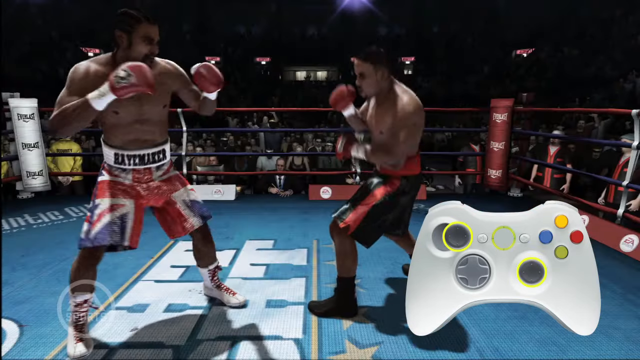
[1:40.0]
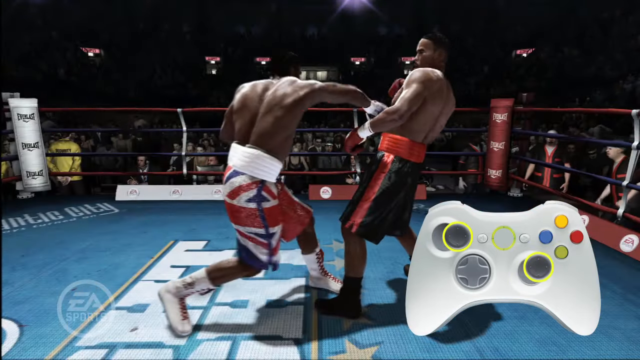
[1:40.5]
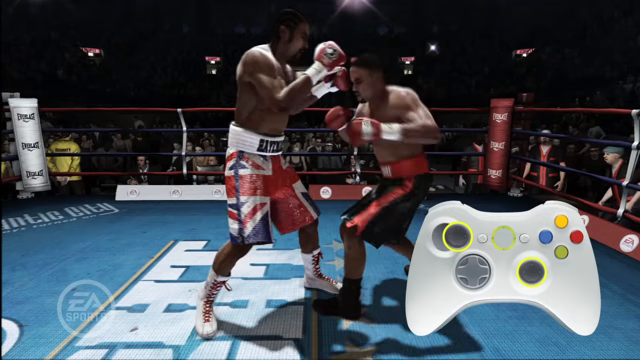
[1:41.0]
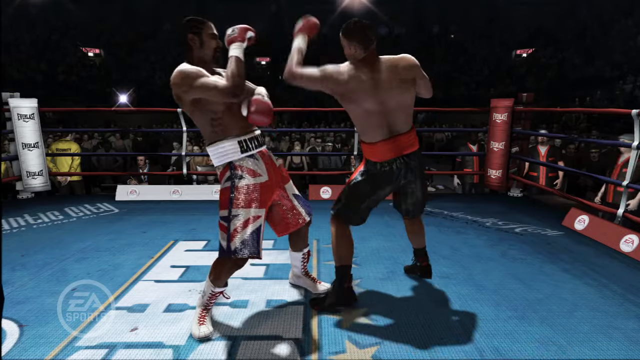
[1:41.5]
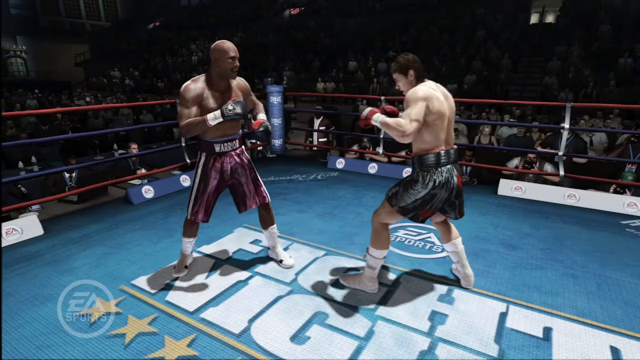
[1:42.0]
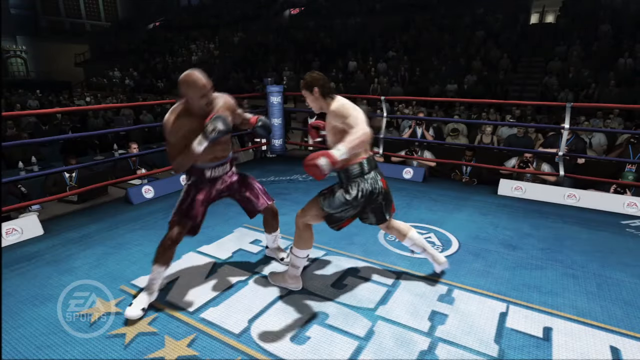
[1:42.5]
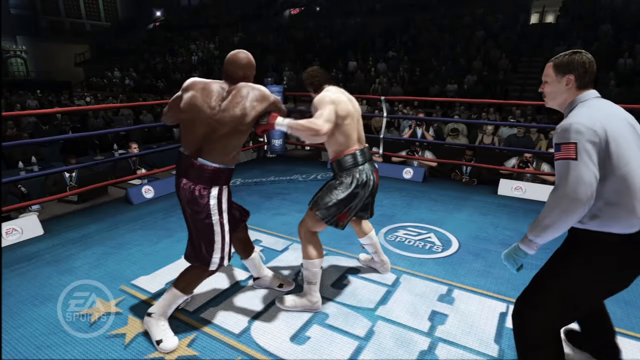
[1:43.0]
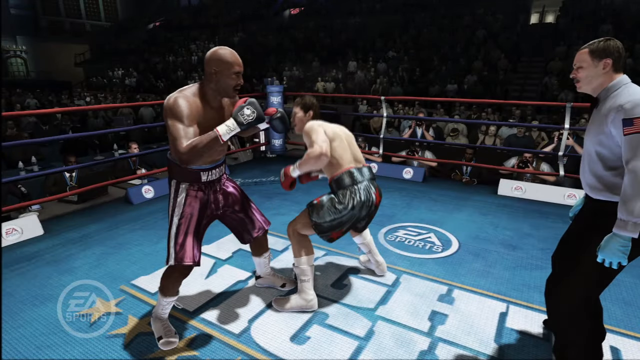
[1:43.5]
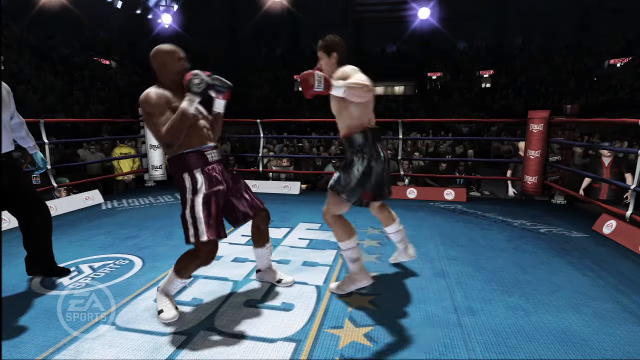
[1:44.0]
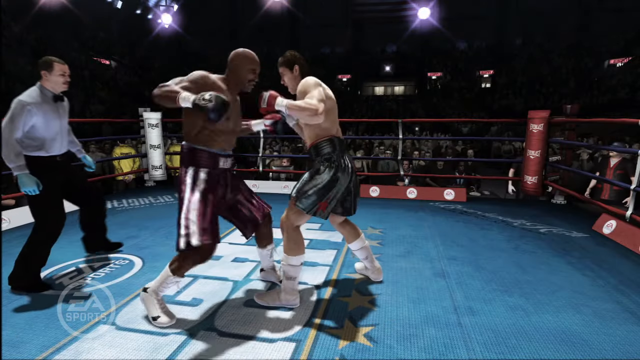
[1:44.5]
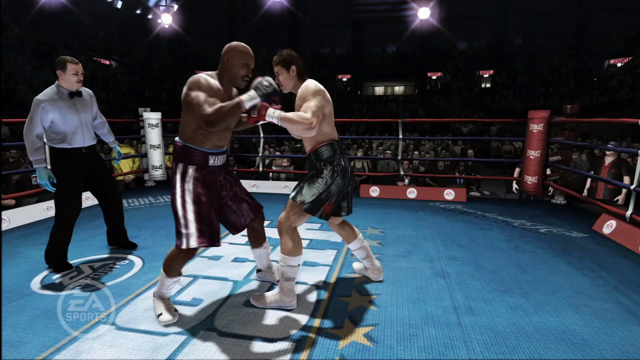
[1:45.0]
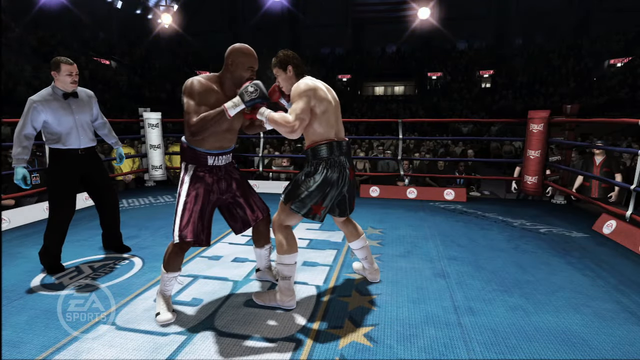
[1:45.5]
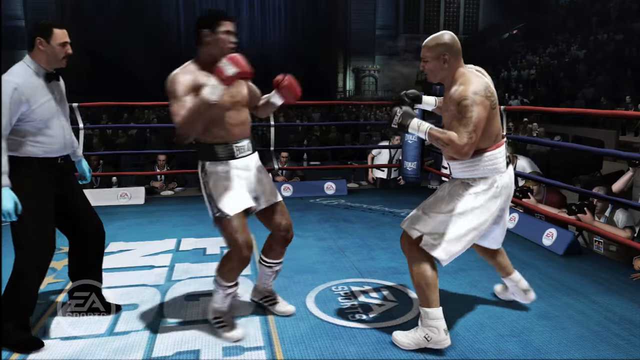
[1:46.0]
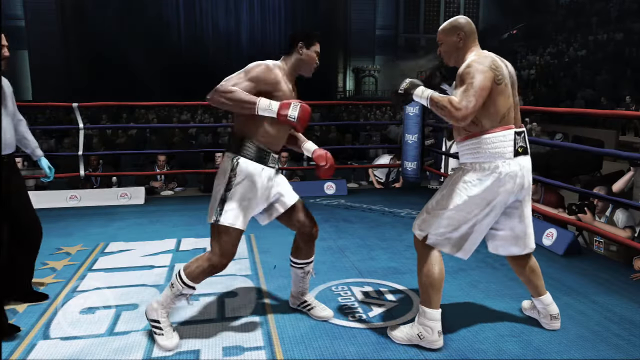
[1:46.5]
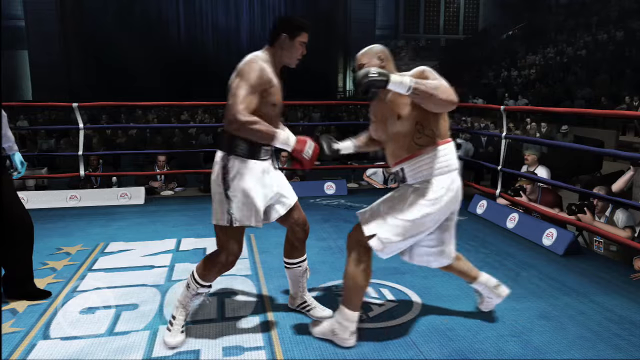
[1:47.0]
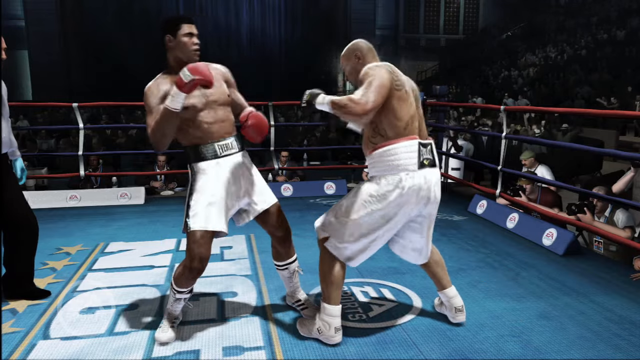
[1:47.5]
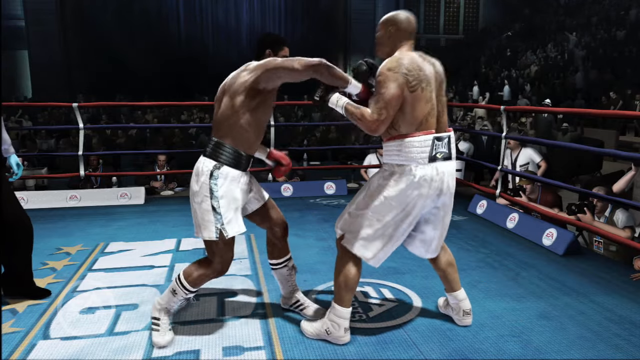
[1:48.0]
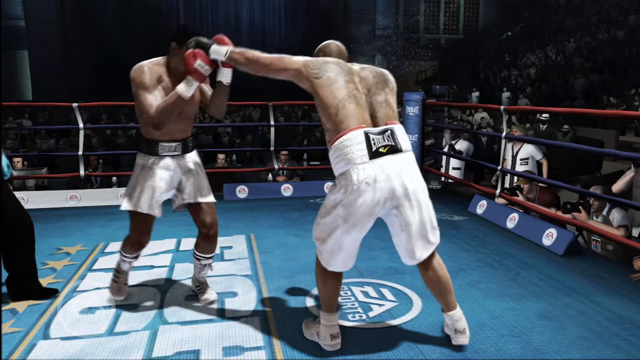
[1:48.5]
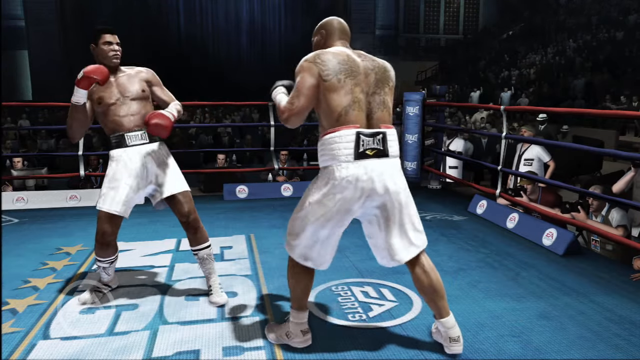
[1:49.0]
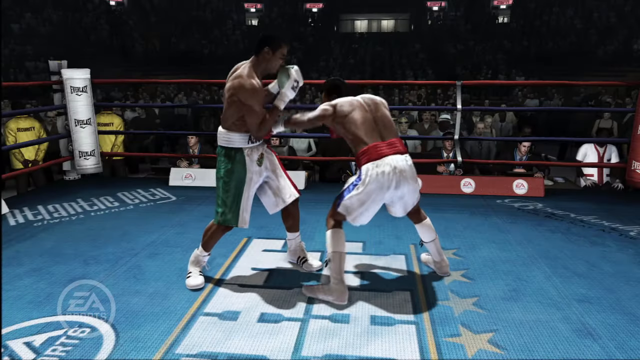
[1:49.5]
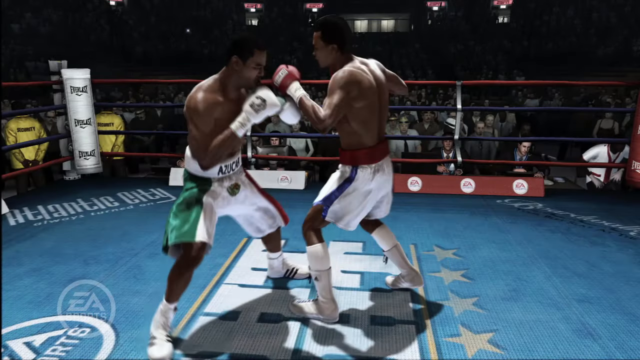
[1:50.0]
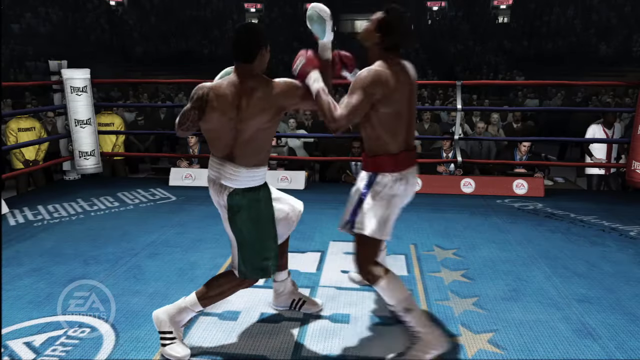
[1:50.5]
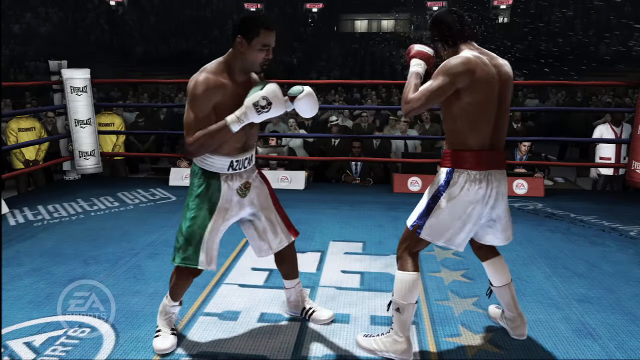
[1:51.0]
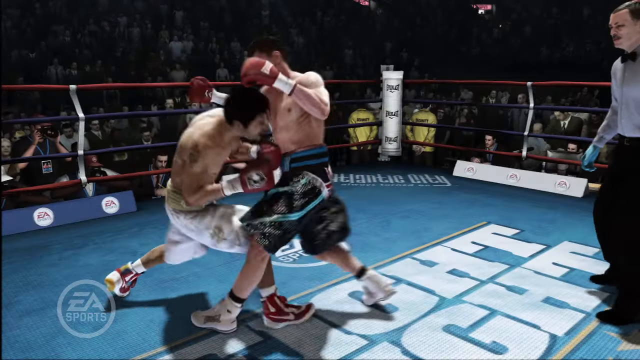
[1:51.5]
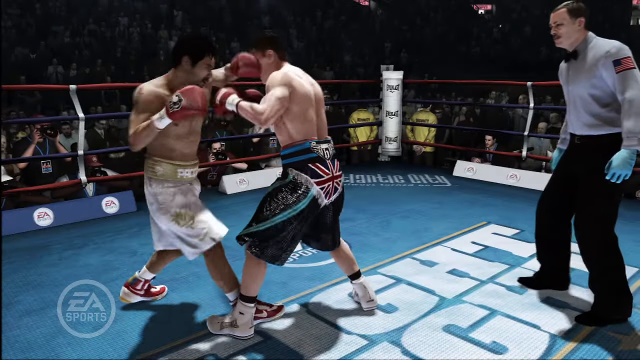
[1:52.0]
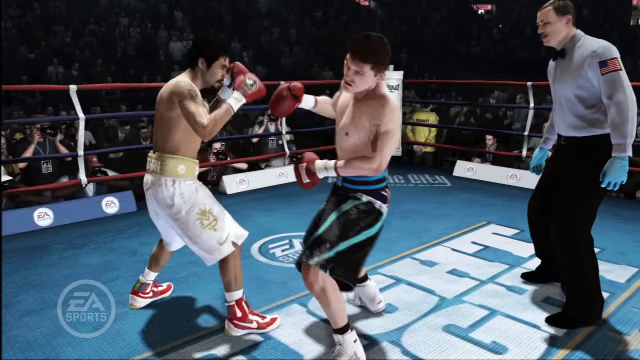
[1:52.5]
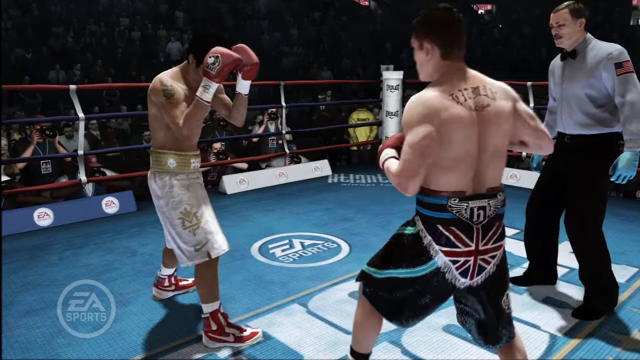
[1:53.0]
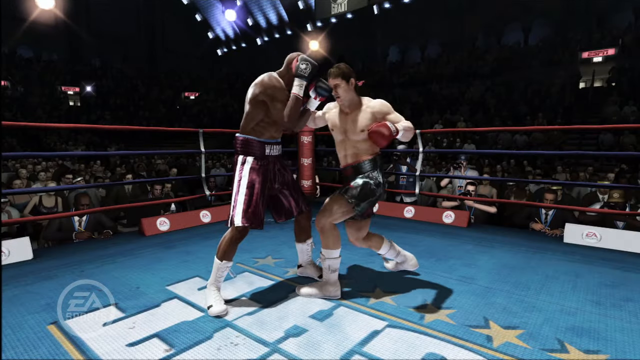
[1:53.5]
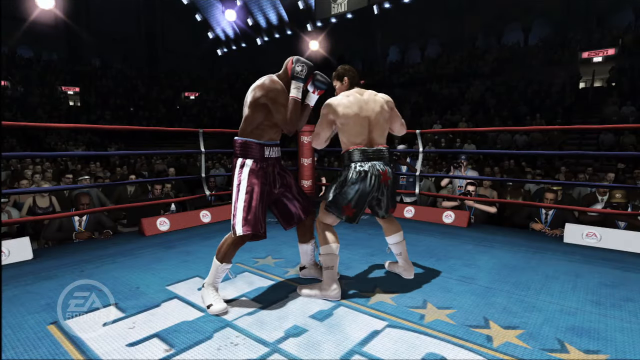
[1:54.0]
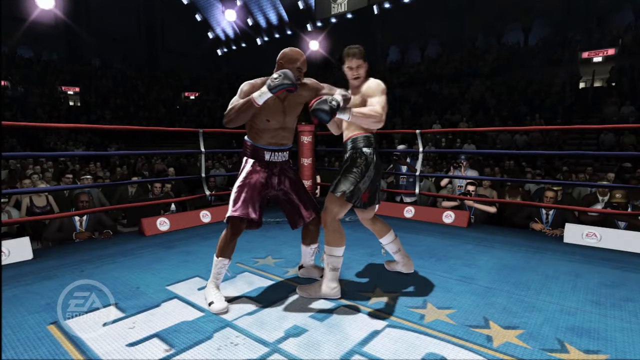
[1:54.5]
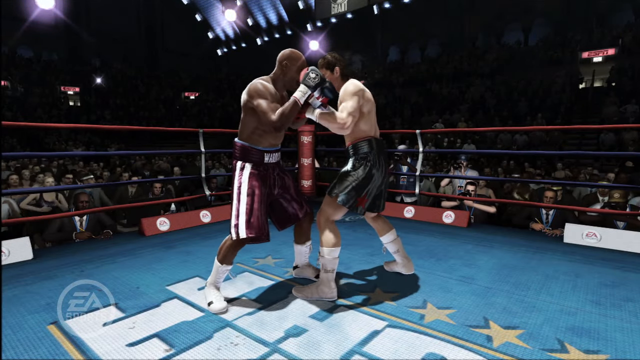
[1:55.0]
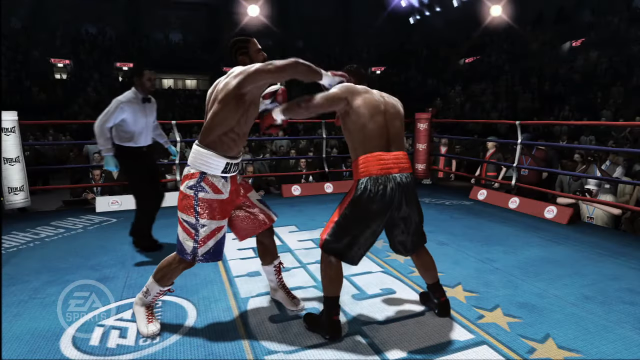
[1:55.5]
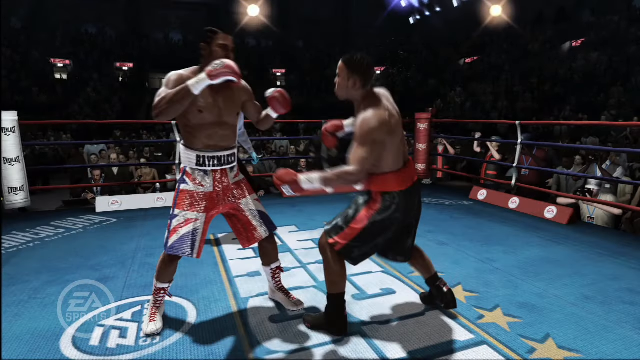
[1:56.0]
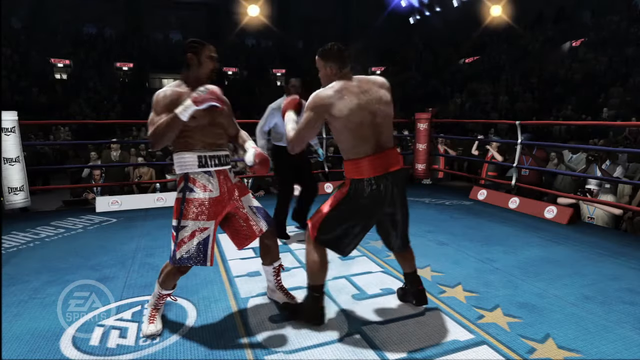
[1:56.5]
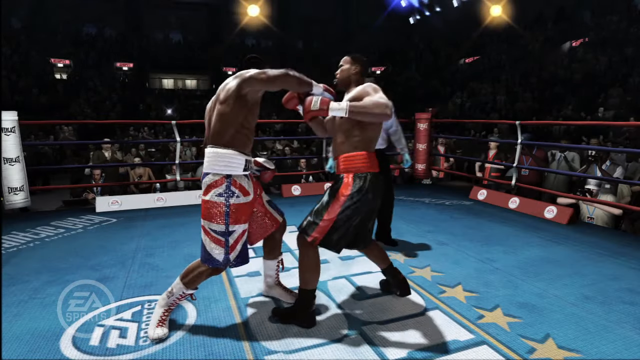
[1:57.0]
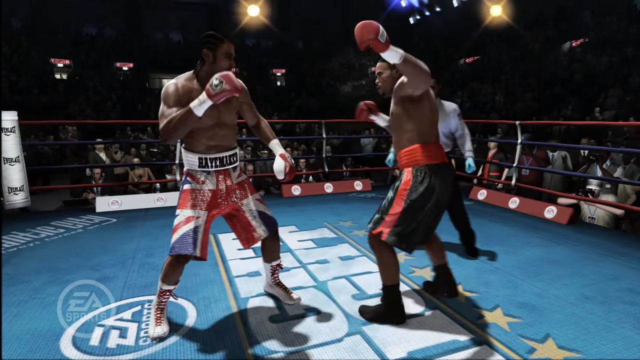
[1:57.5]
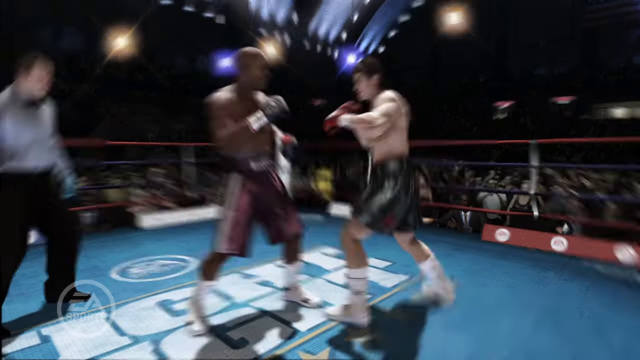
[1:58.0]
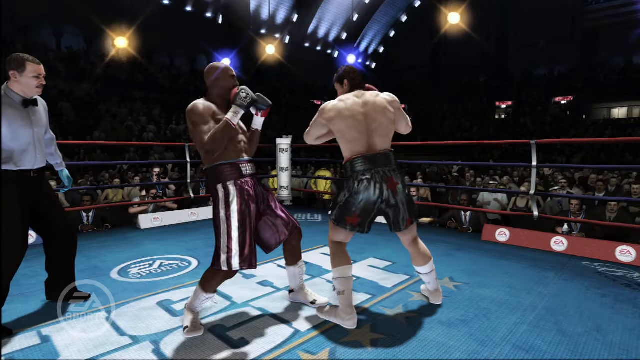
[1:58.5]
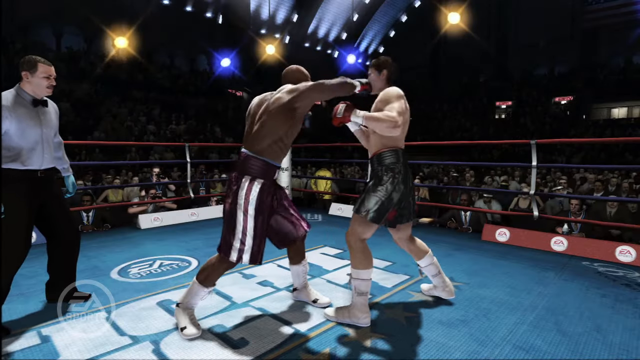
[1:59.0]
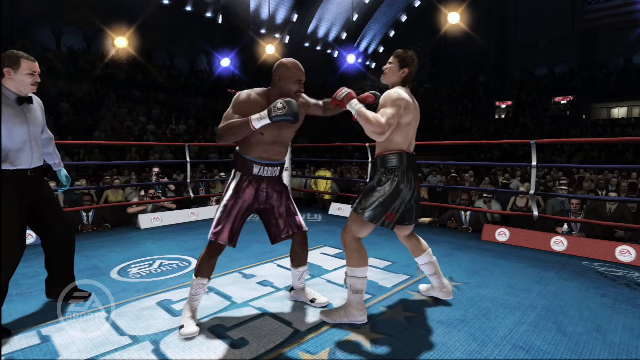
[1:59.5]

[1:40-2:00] The fighters continue to battle, starting with the man in the British shorts and the man in black shorts with stripes on the side. Then come two other players, both in white pants, then two more, one of whom appears to wear a Spanish-style flag: white, with green on one leg and red on the other. The players all seem to represent their countries in some way. The video continuously cycles through different pairs of boxers fighting each other. In the background a referee walks around them, guarding the fight. He wears what look like latex gloves, black pants, black shoes, a white shirt with an American flag patch on the upper sleeve toward his shoulder, and a black bow tie. He has a mustache and short brown hair.